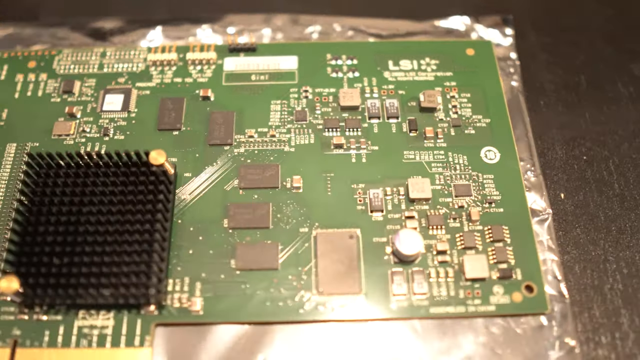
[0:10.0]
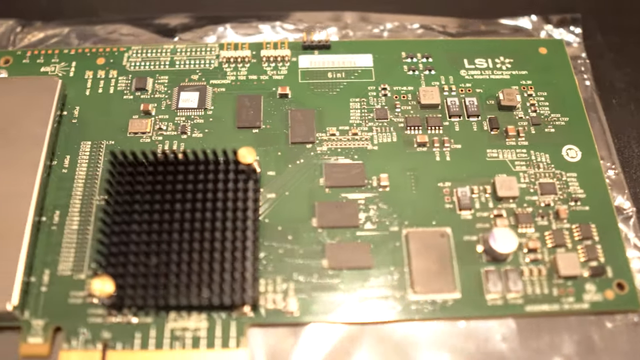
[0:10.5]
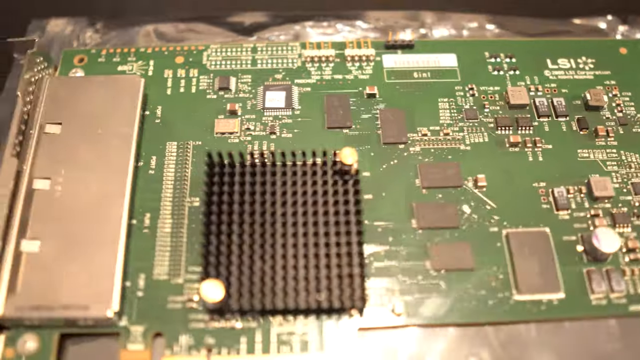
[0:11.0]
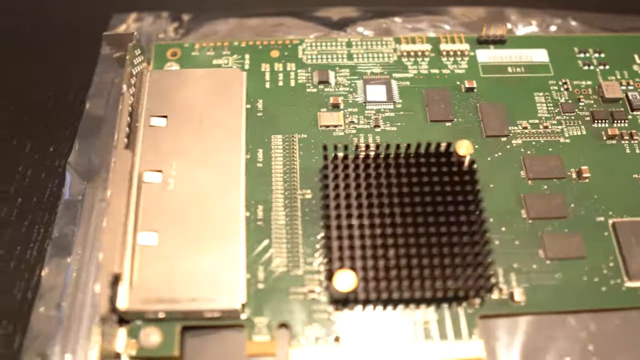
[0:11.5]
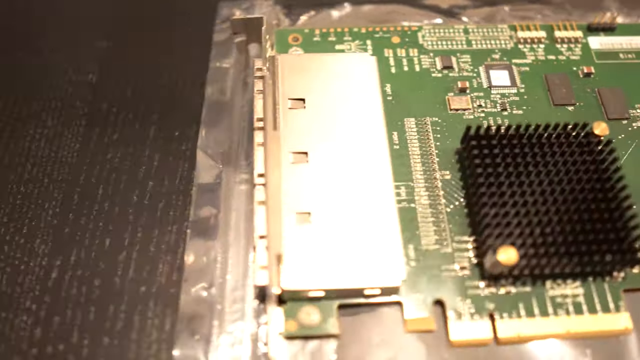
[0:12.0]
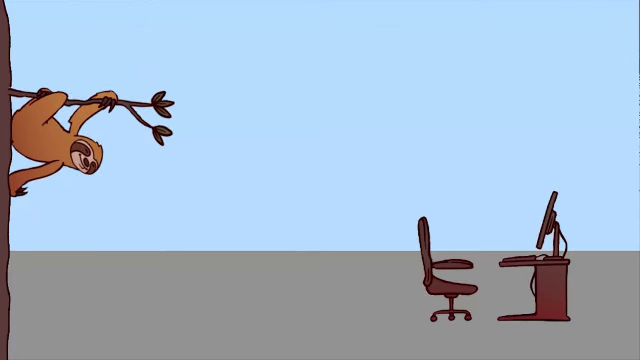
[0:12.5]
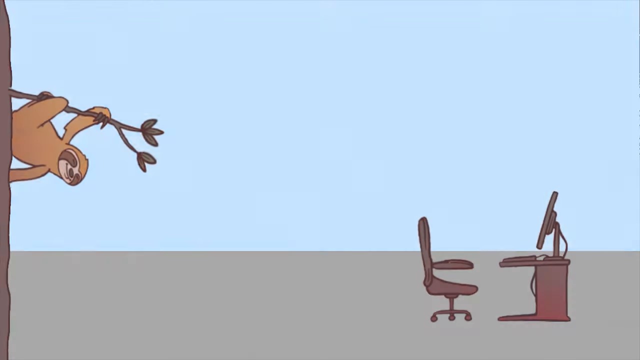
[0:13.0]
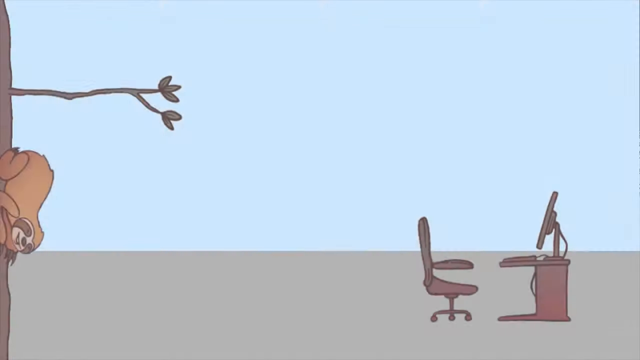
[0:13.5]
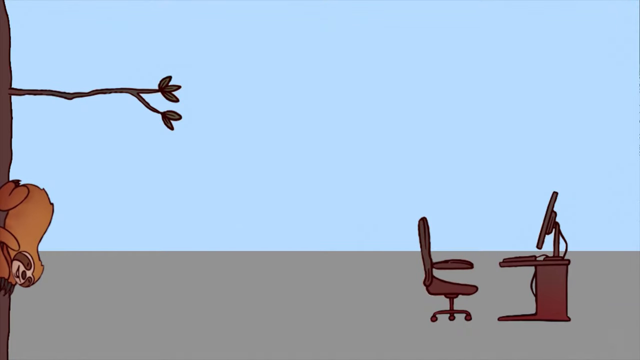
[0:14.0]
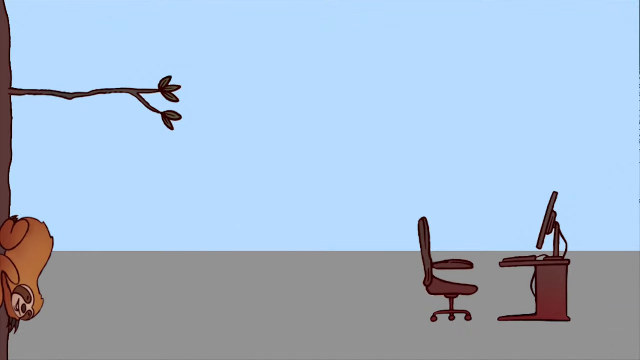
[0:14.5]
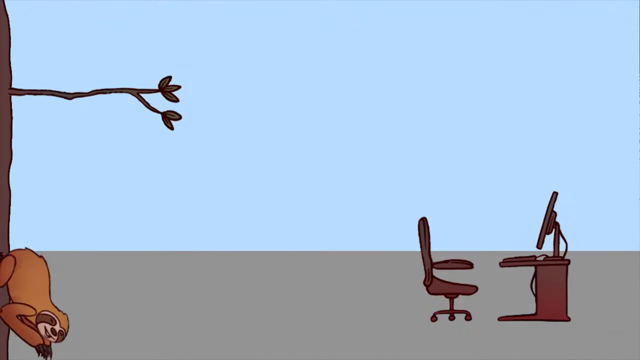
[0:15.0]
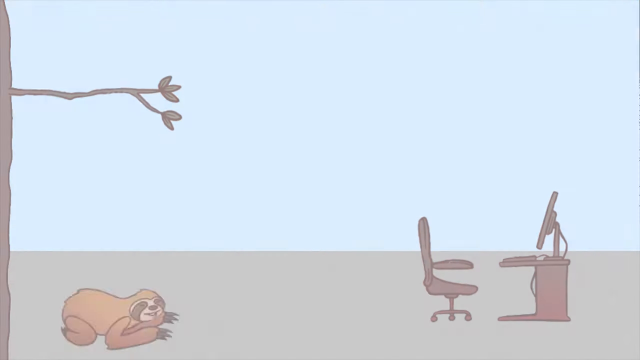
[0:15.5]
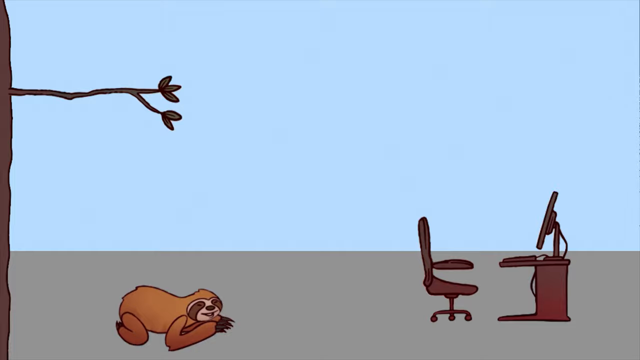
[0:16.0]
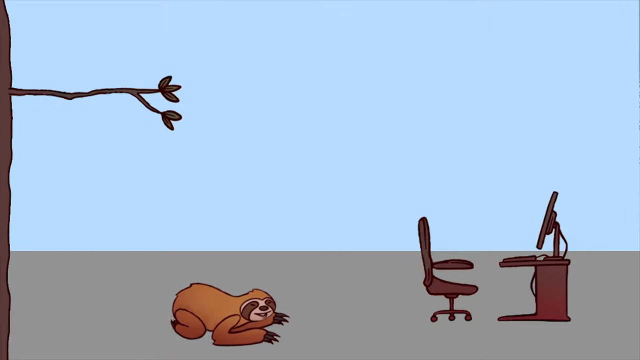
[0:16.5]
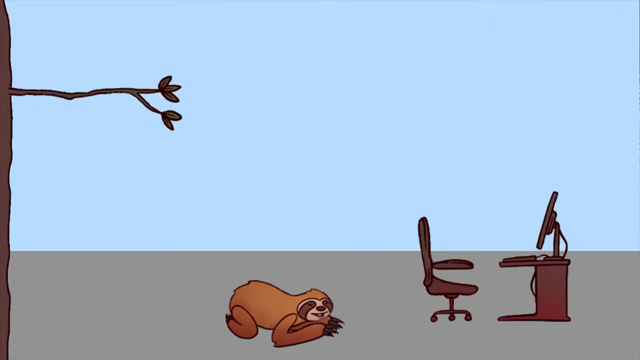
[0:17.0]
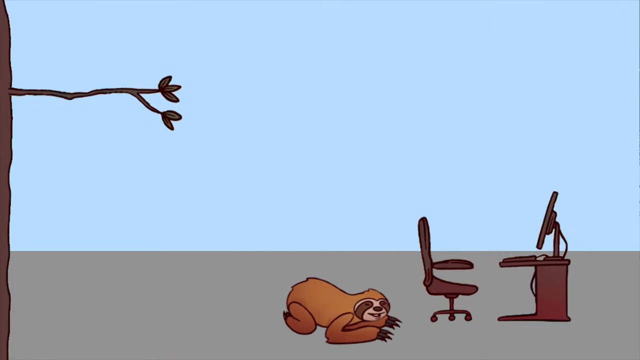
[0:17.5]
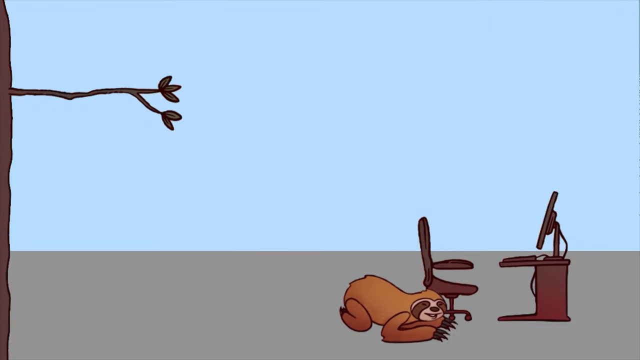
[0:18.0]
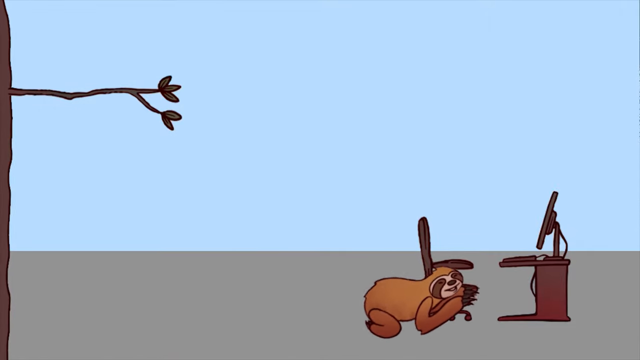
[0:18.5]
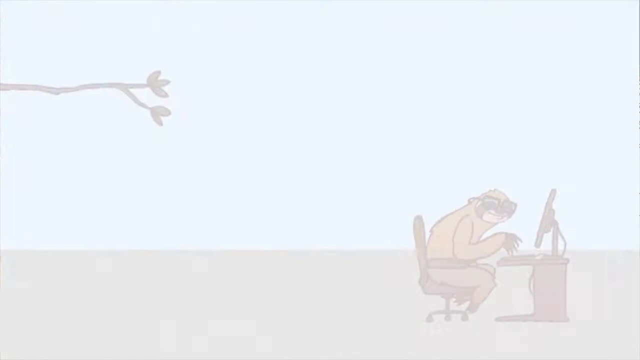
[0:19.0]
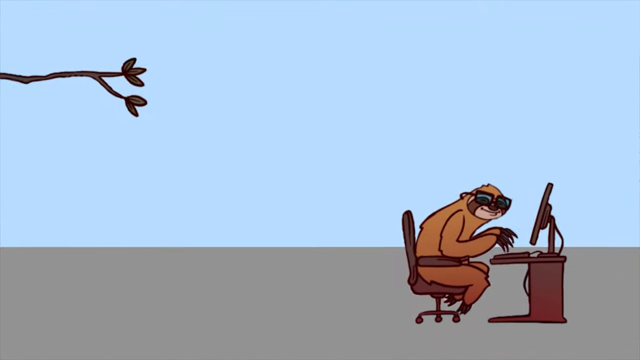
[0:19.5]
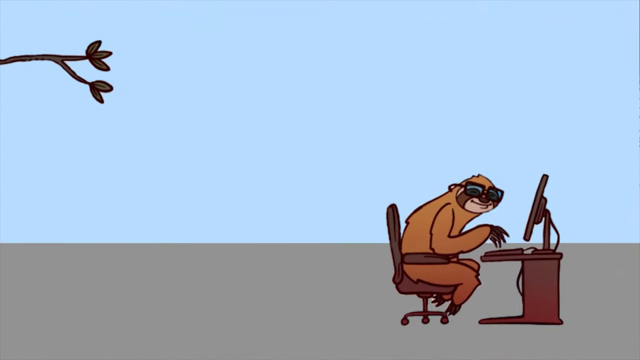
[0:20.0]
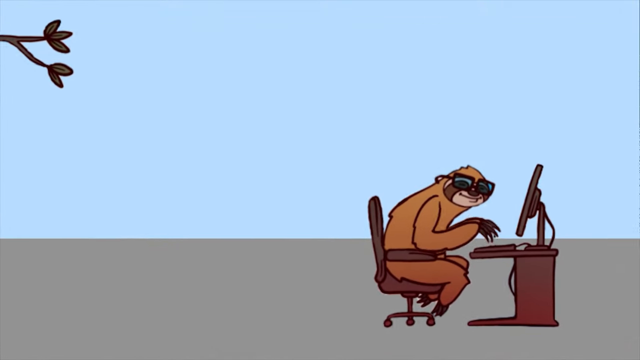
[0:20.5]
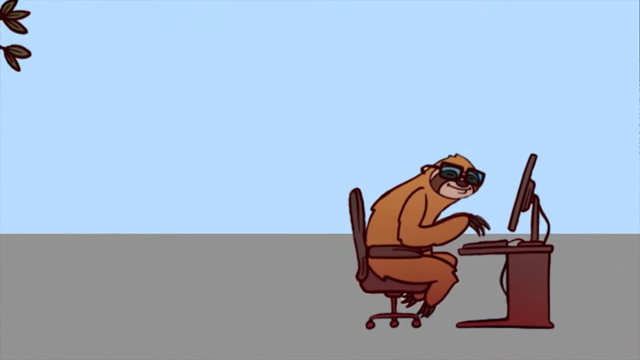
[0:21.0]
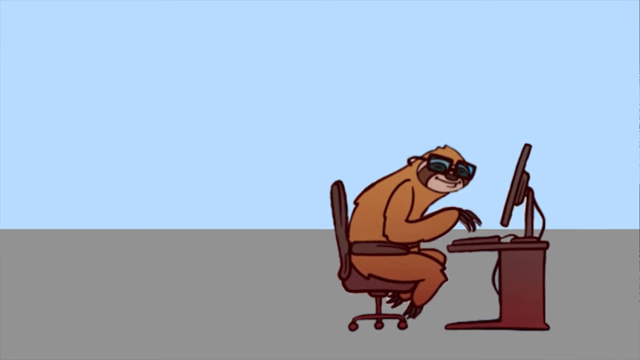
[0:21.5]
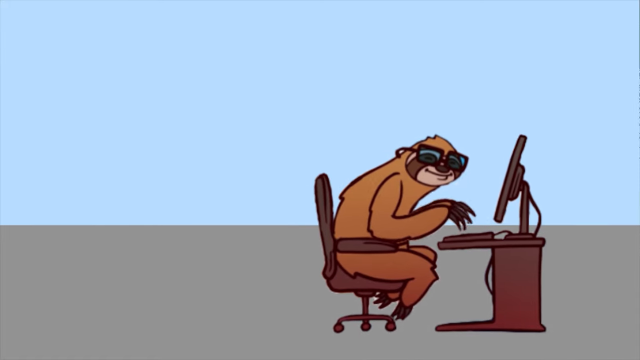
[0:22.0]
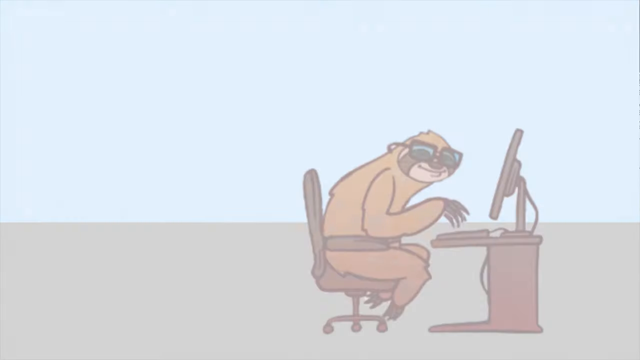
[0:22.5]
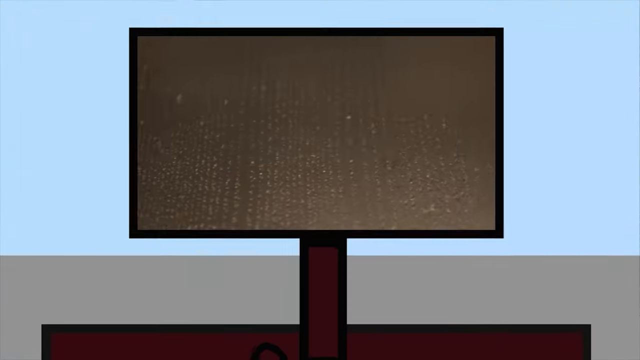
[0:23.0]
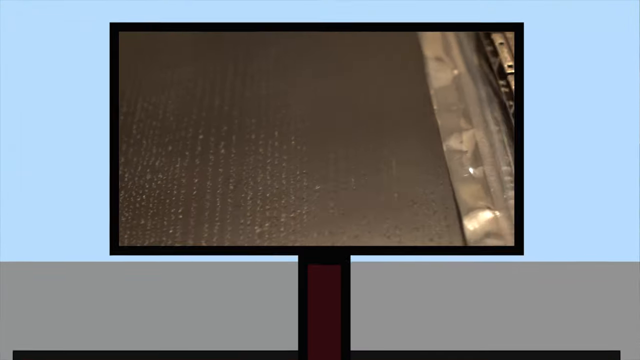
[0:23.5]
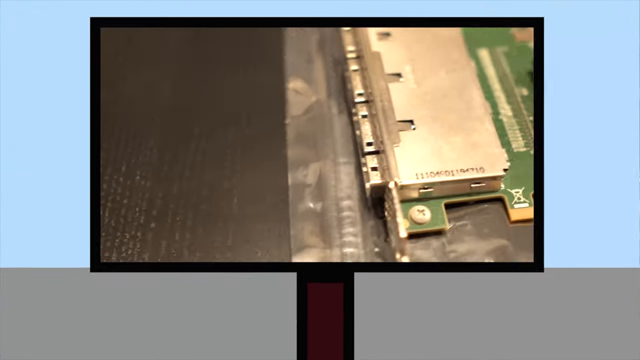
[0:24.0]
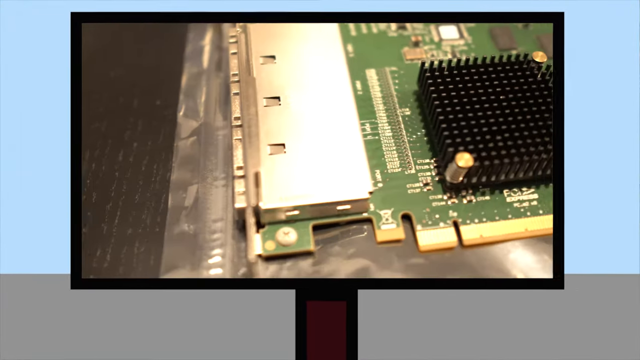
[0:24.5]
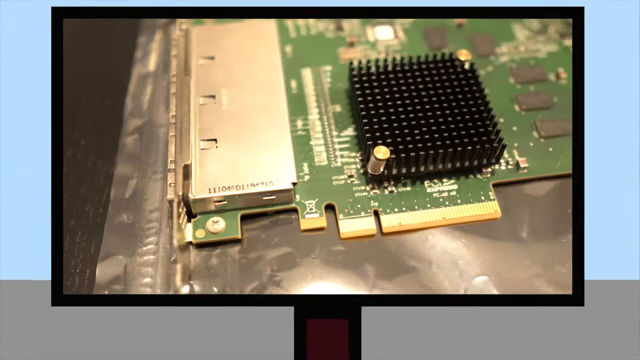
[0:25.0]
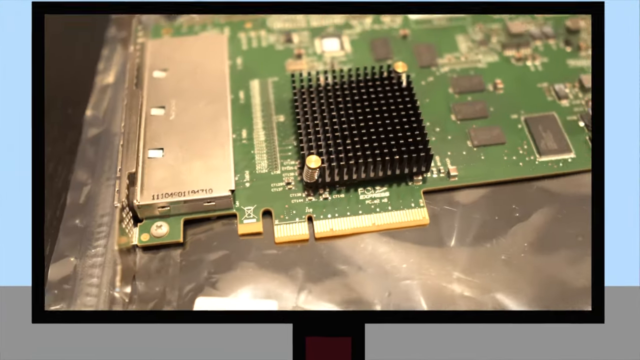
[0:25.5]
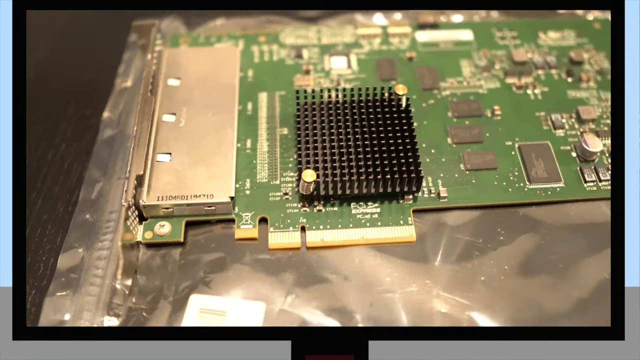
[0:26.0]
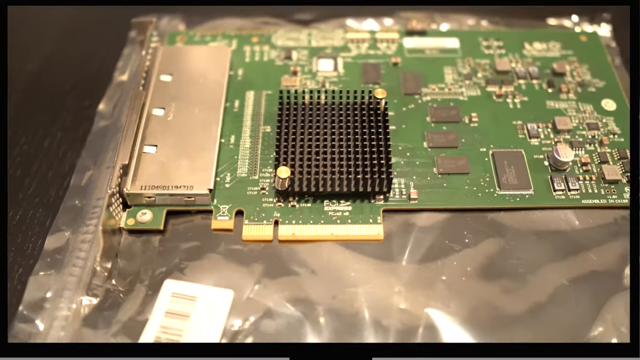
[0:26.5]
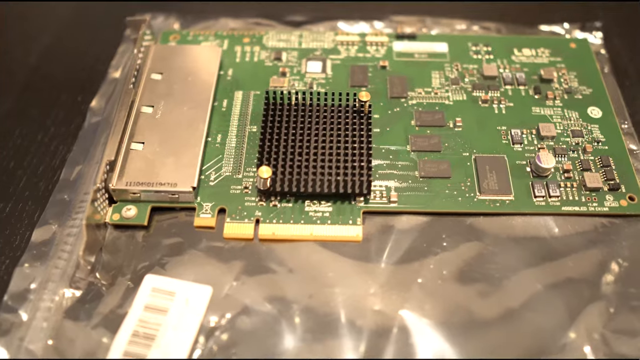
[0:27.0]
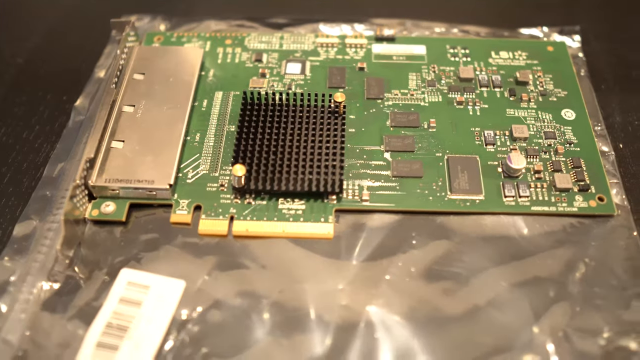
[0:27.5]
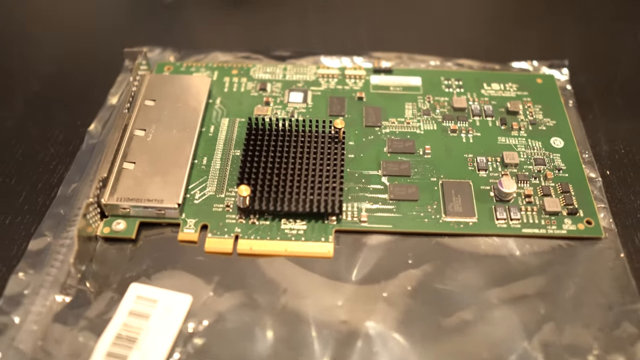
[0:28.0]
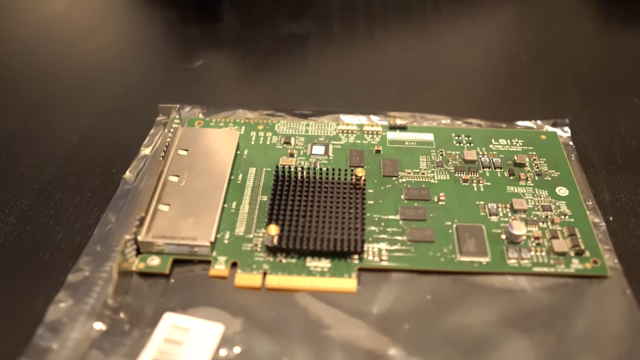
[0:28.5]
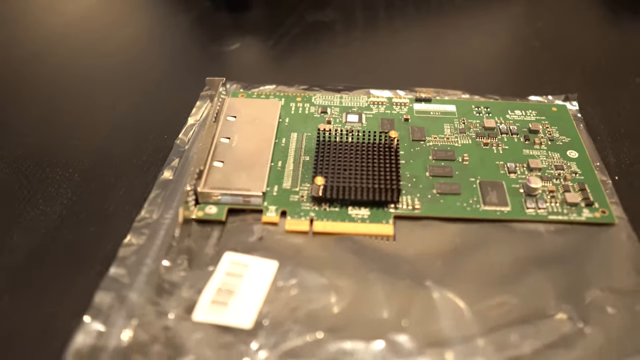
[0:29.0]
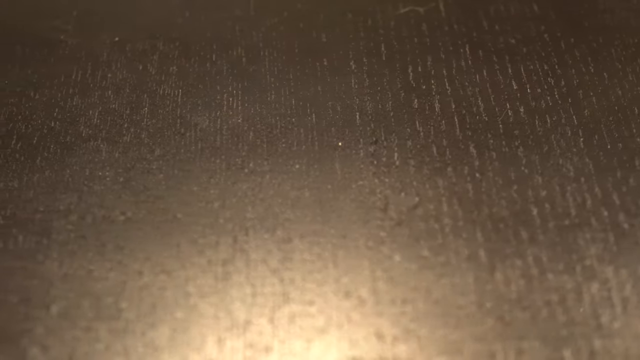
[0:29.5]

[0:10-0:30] The camera continues to pan over the board, which may be a motherboard, a hard drive for a computer, or a board for some type of game. Soldered elements cover the green board, and it has "LSI" with a logo in the corner. Switch plates, boards, a bracket, and many silver and white pieces are visible, along with a few colored buttons that appear to be orange, one on each corner. The scene then switches to a sloth swinging on a branch with five leaves. On the ground below are a chair and a desktop computer with a wire coming down. The sloth comes down, heads toward the chair, gets on the computer and starts typing.